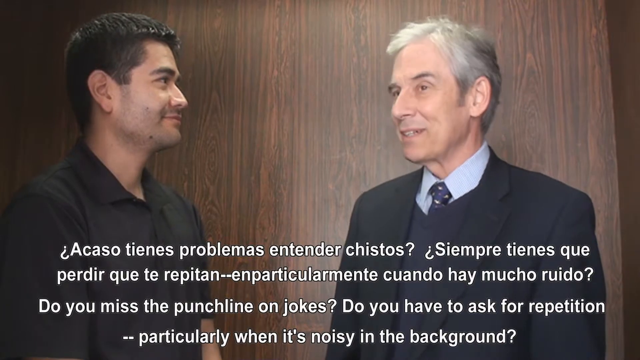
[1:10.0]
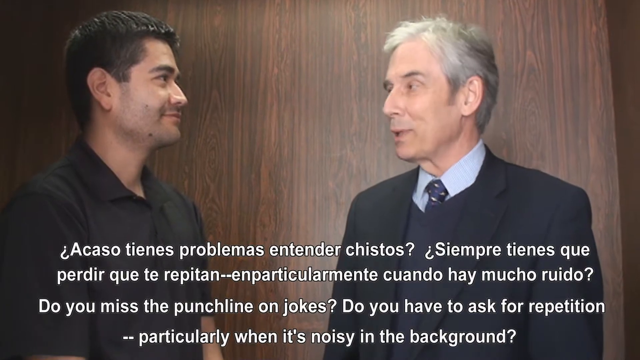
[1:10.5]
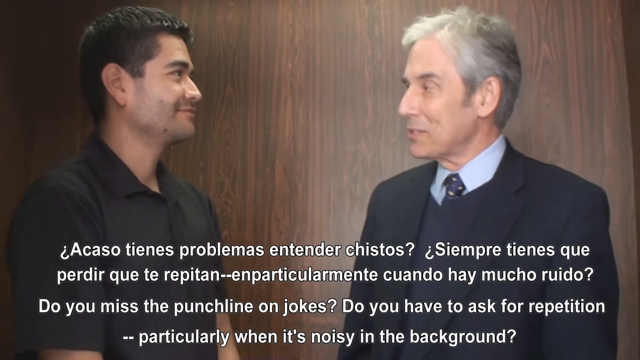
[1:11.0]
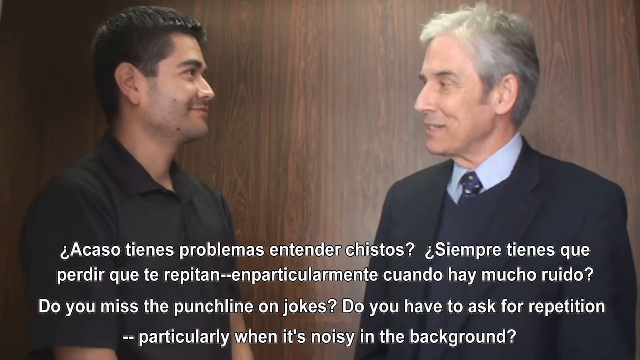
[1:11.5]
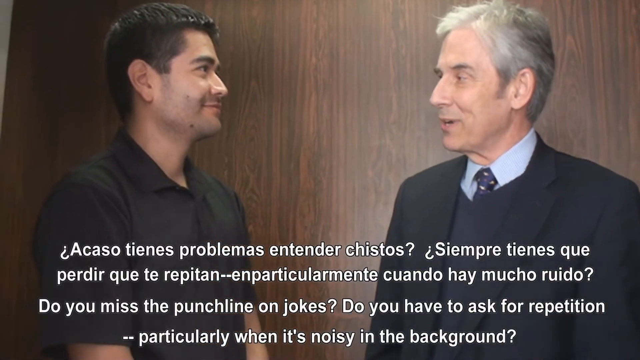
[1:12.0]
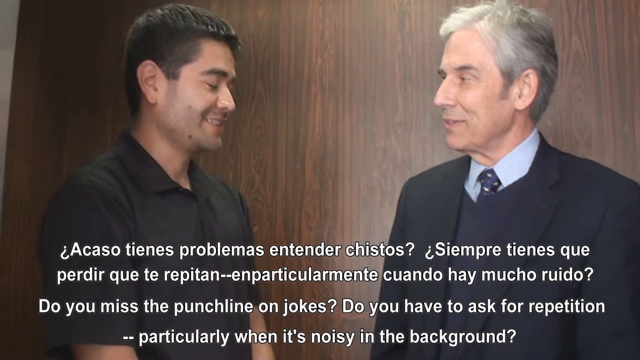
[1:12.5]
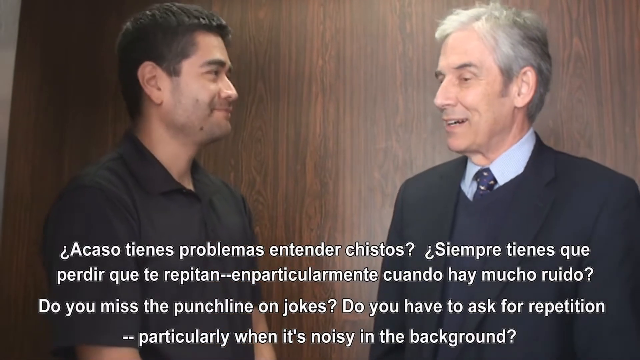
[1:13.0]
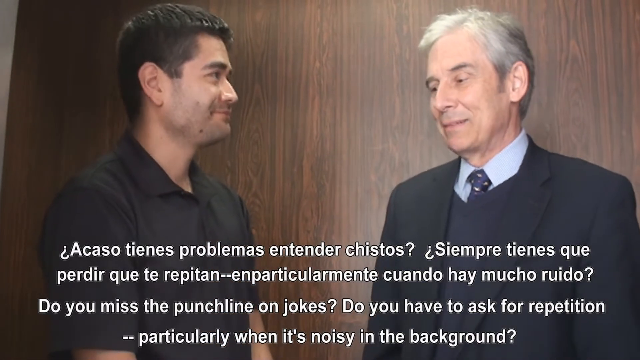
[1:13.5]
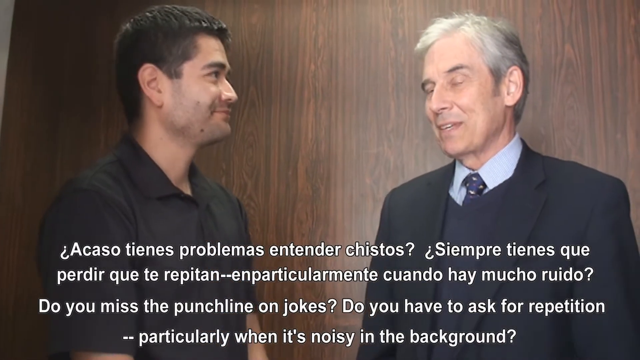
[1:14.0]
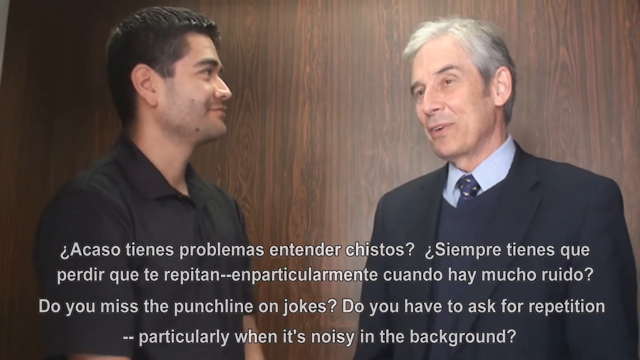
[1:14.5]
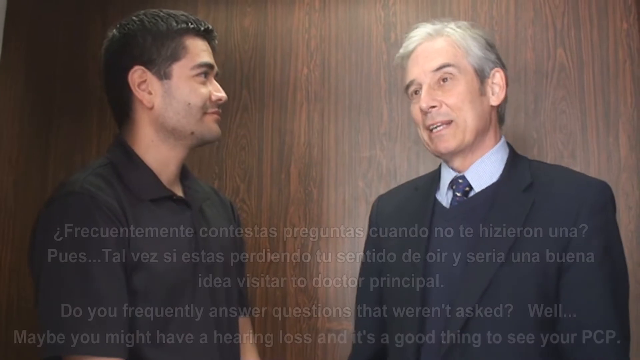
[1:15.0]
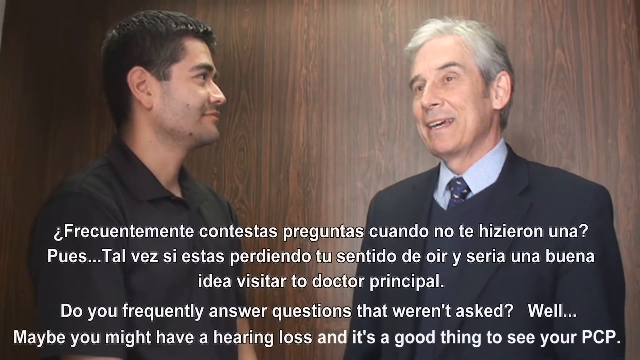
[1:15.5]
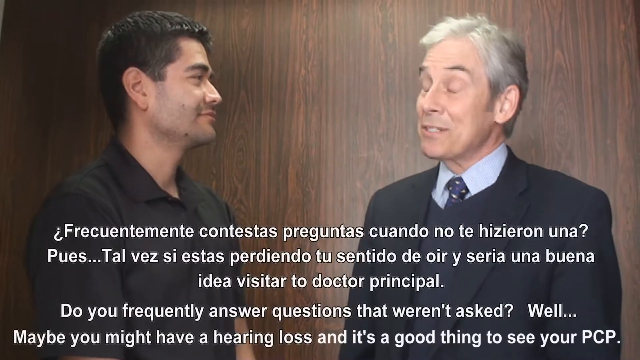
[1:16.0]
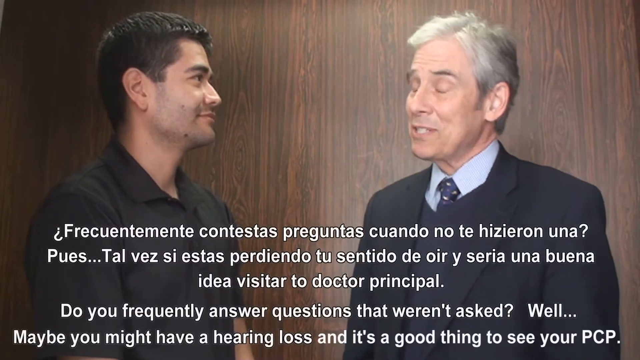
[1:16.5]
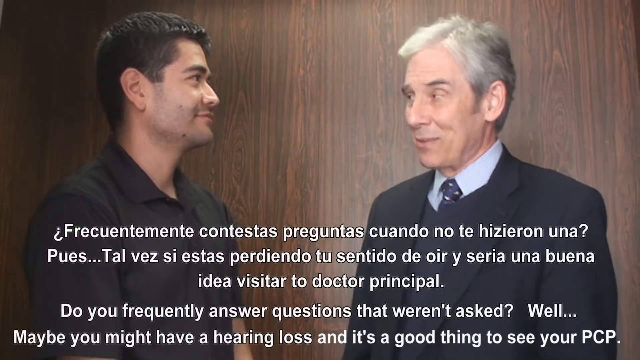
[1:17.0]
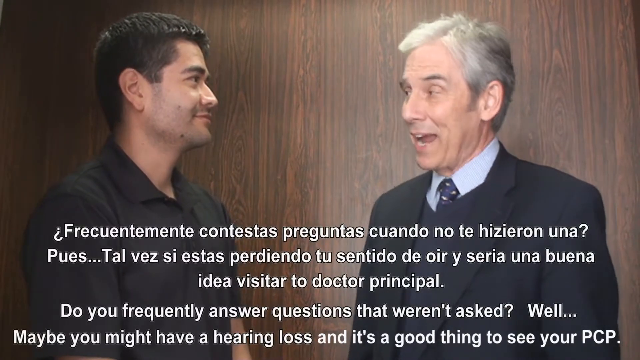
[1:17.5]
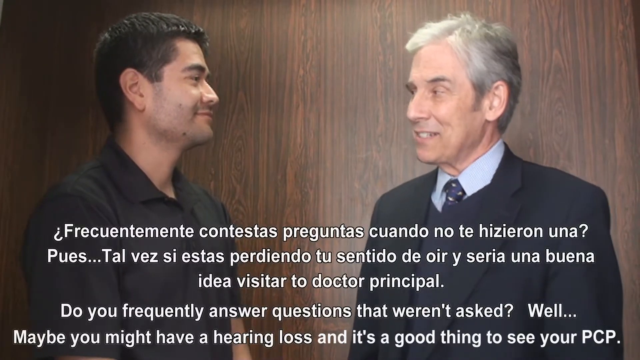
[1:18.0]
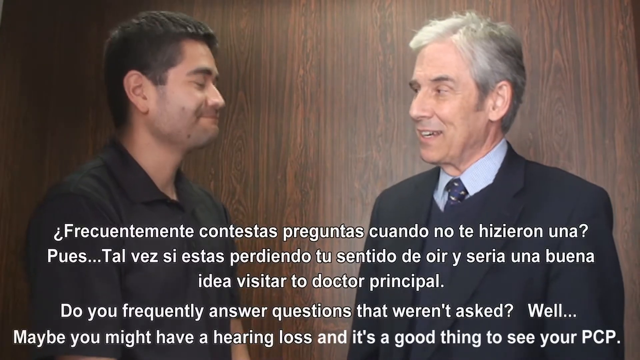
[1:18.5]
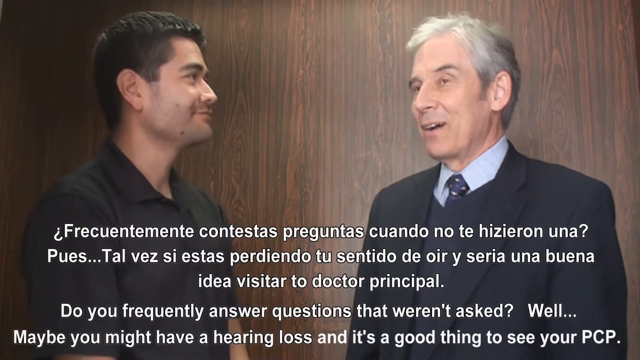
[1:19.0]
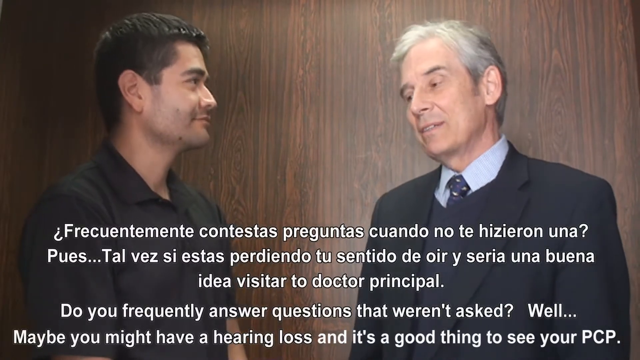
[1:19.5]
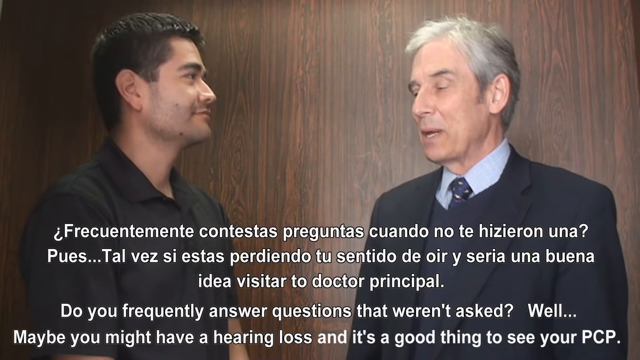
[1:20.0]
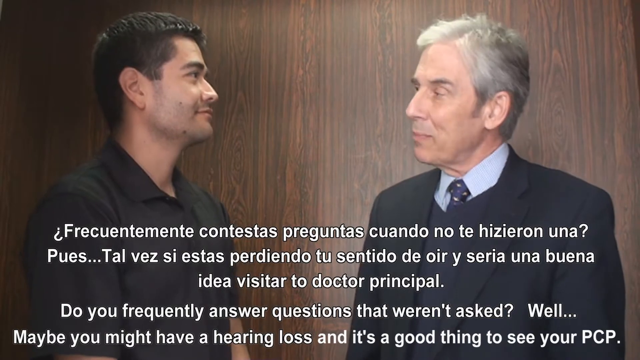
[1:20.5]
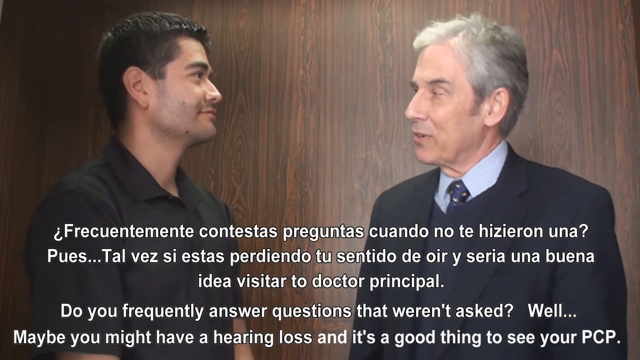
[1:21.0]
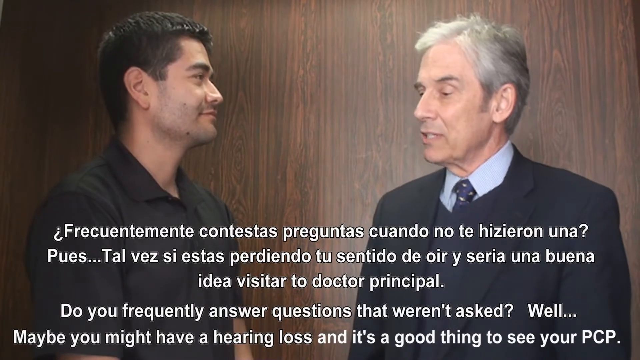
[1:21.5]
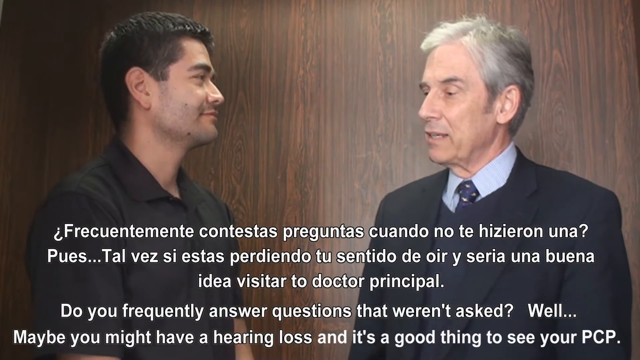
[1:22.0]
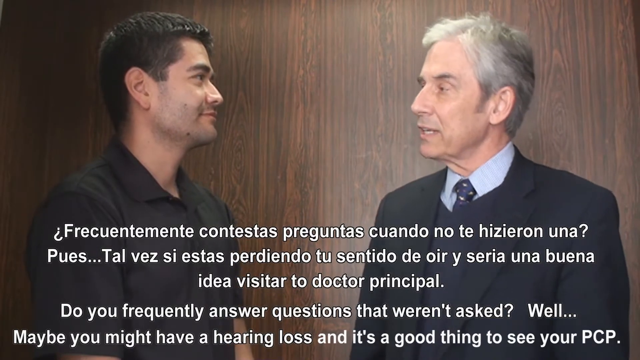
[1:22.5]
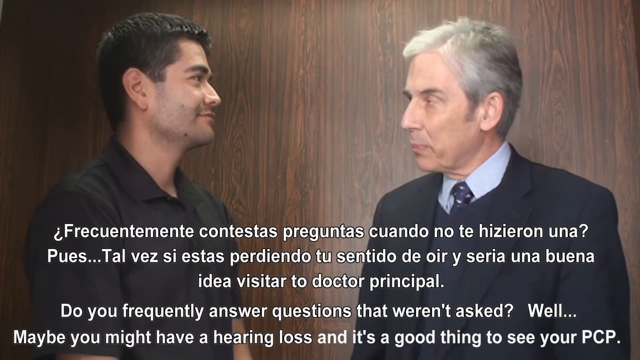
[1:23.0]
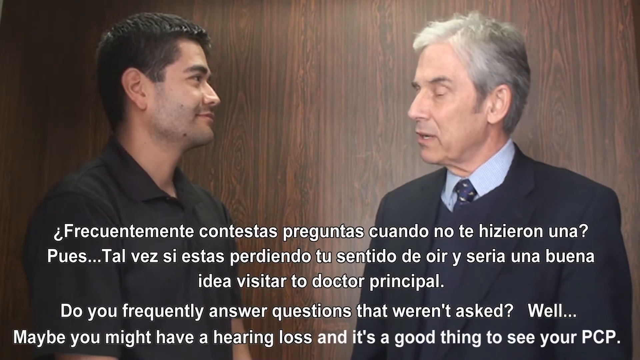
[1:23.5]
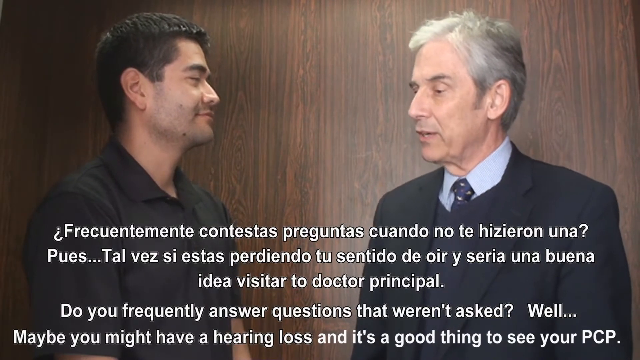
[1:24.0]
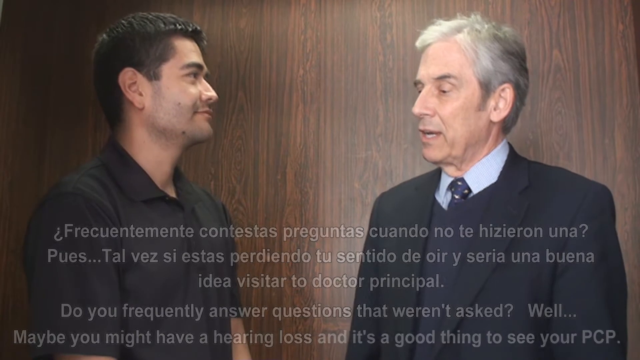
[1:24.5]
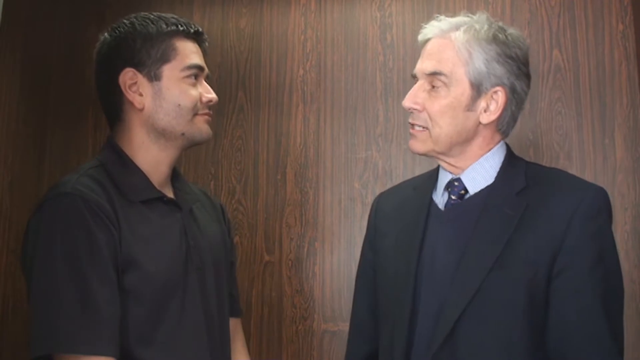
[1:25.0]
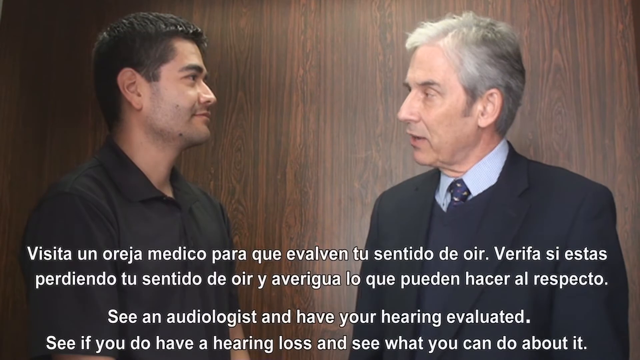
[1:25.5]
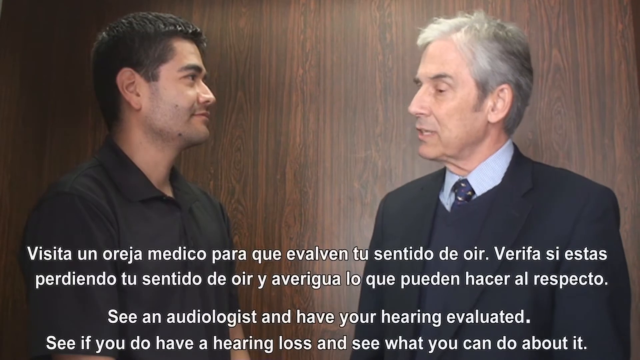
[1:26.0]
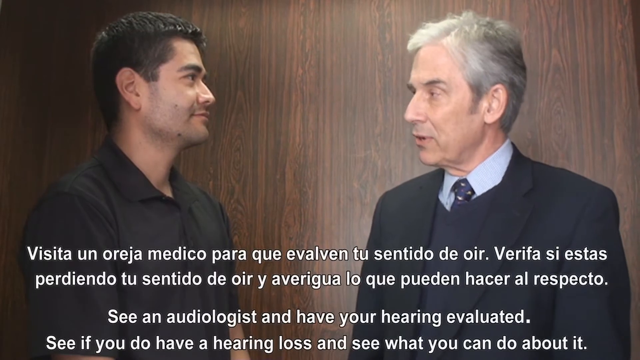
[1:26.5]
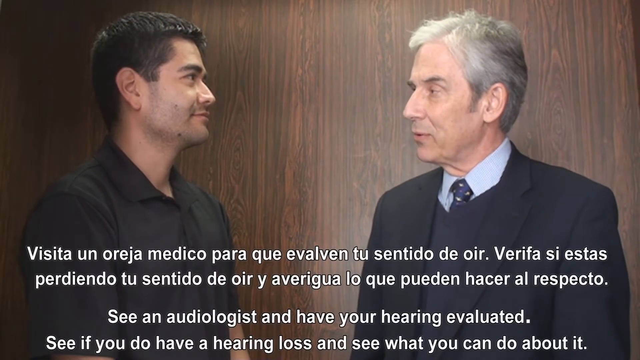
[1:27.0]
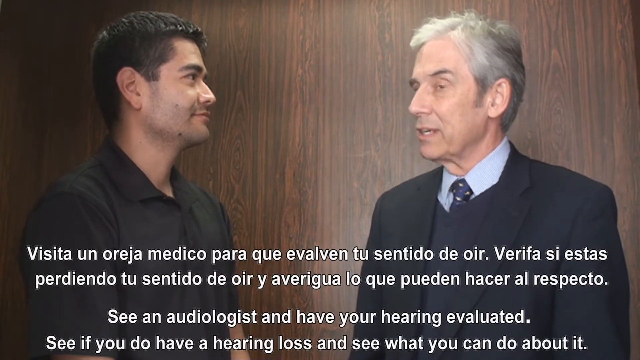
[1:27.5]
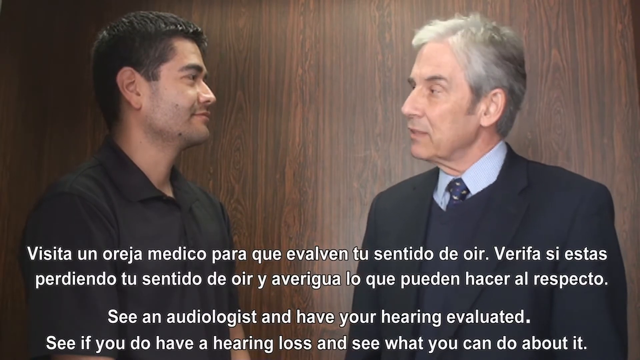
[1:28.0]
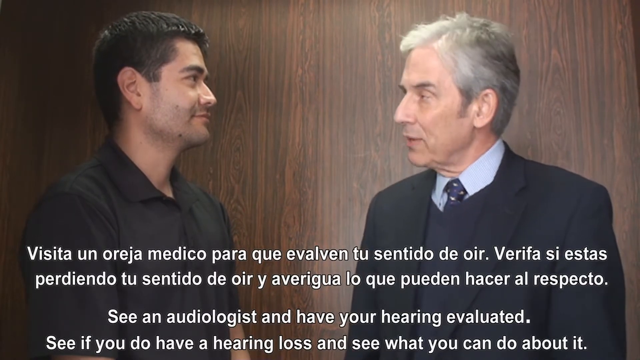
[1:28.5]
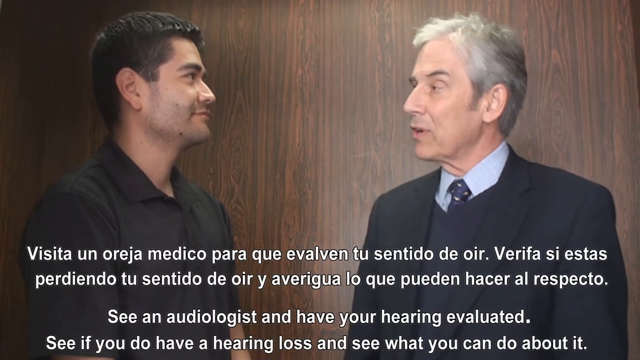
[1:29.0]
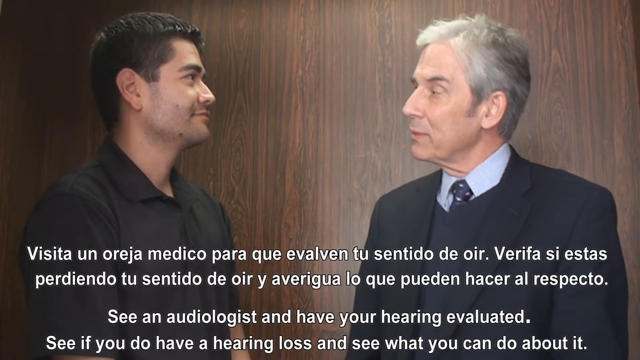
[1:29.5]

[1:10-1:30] In the elevator, the doctor speaks to the man on the left, asking "do you miss the punchline on jokes", "do you have to ask for a repetition, particularly when it's noisy in the background" and "do you frequently answer questions that weren't asked". He keeps talking and nodding, and says to see an audiologist and have your hearing evaluated, see if you do have a hearing loss, and see what you can do about it. The doctor has white hair and wears a suit with a tie. The man on the left wears a black shirt and is in his mid-30s.